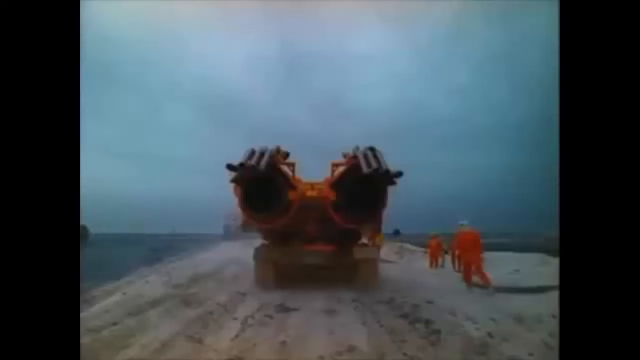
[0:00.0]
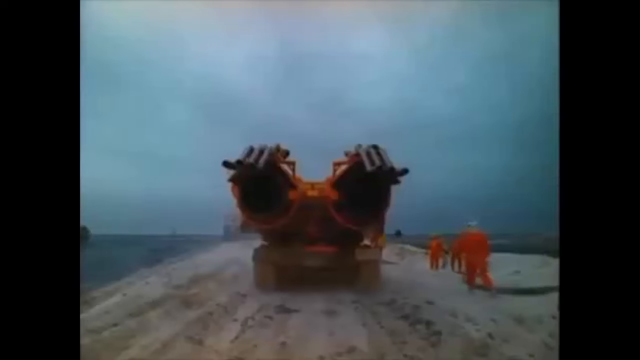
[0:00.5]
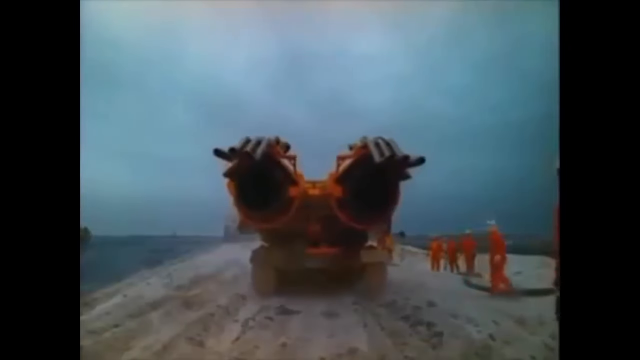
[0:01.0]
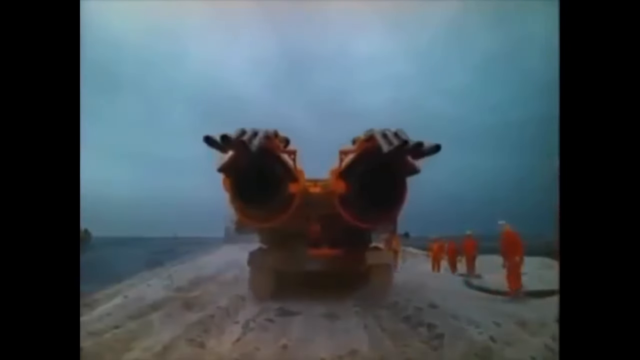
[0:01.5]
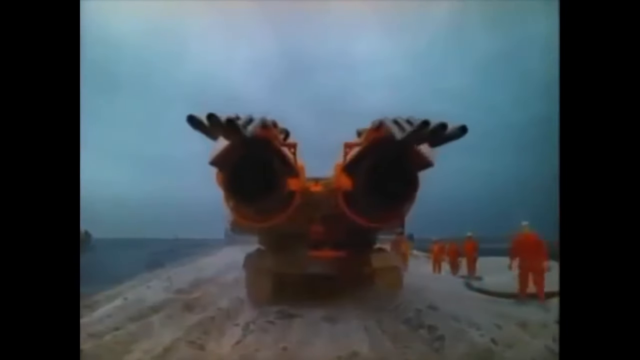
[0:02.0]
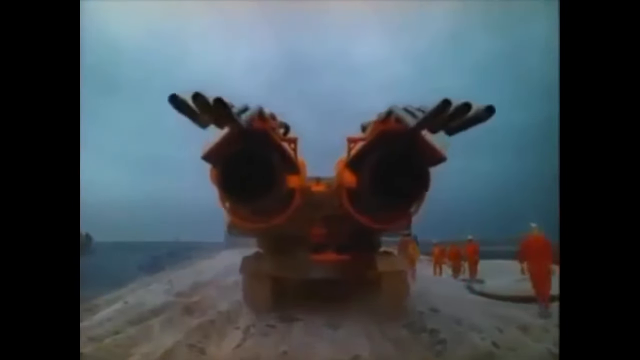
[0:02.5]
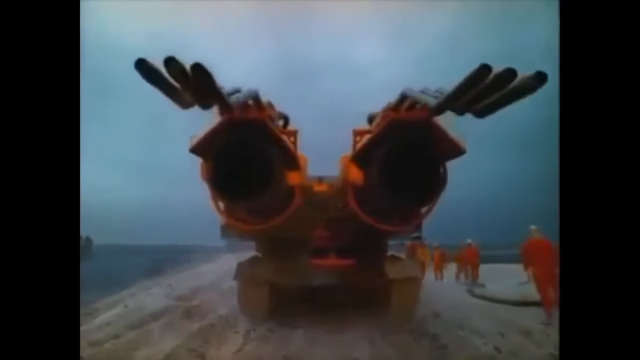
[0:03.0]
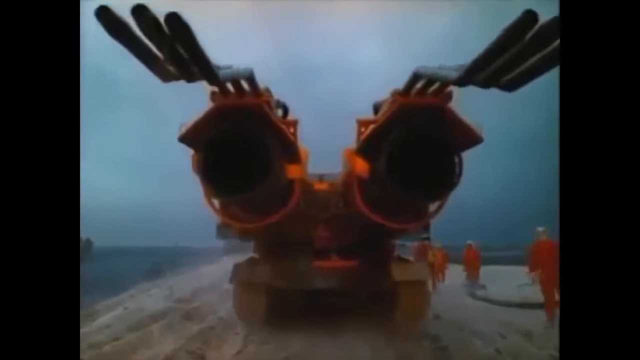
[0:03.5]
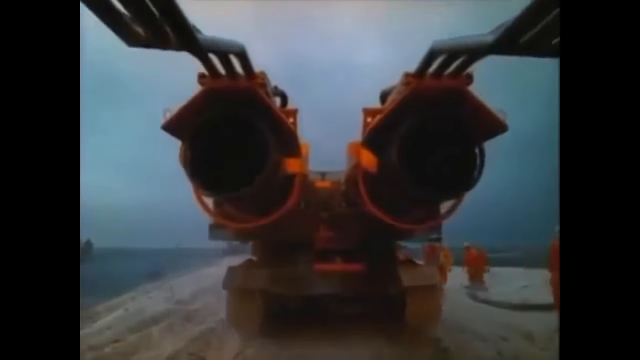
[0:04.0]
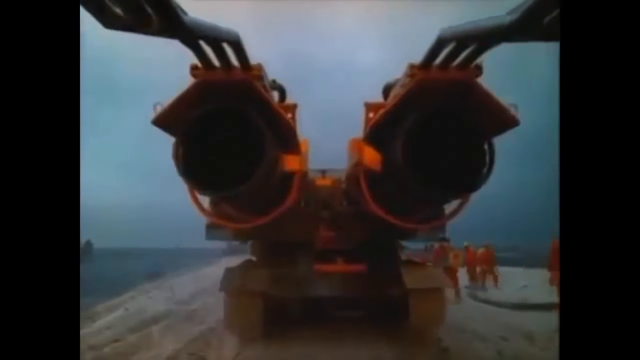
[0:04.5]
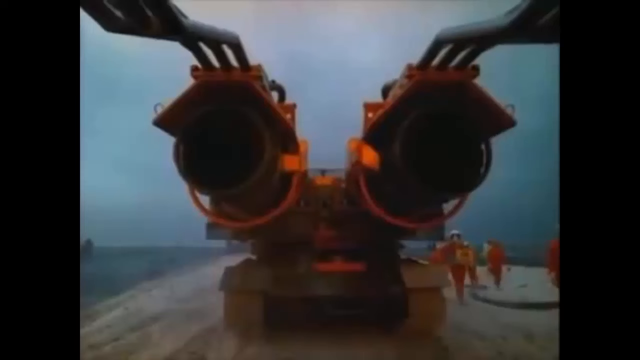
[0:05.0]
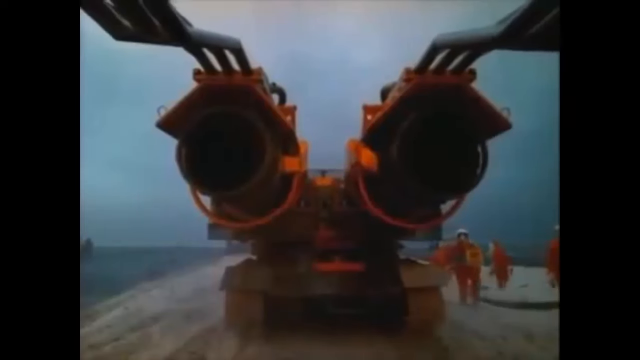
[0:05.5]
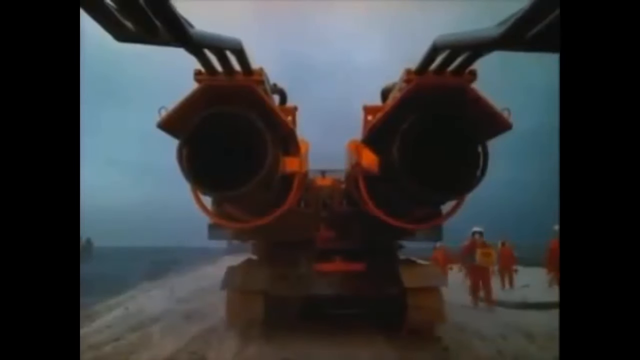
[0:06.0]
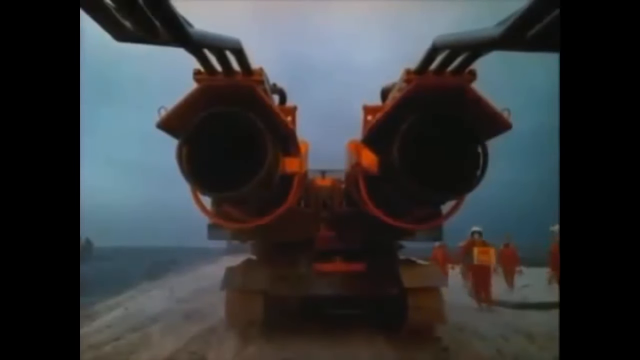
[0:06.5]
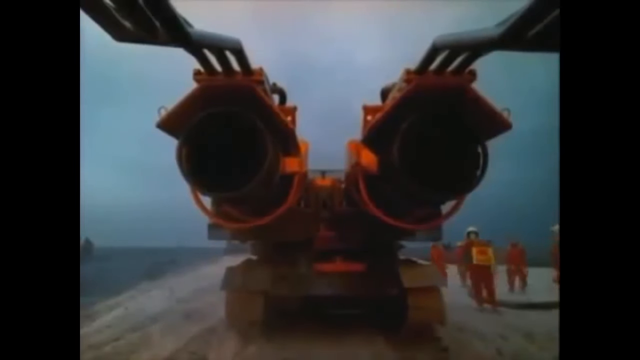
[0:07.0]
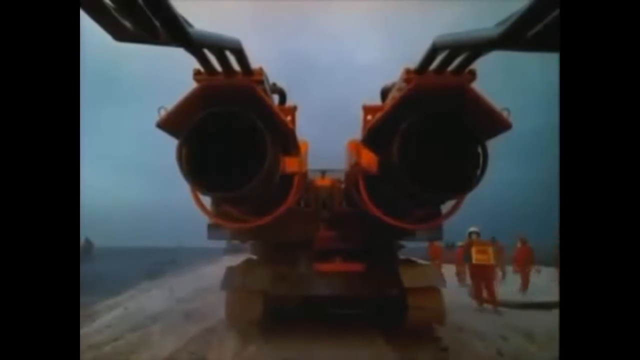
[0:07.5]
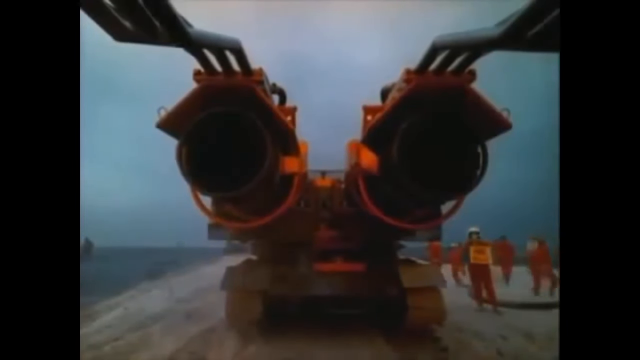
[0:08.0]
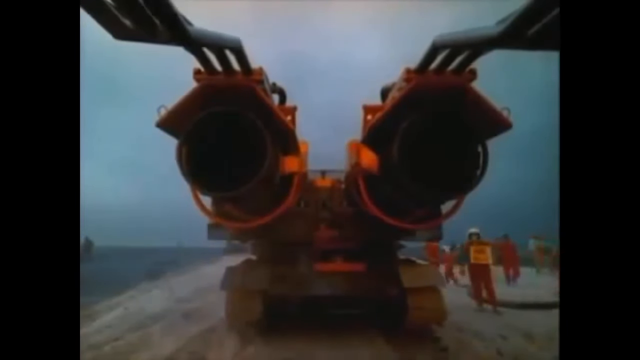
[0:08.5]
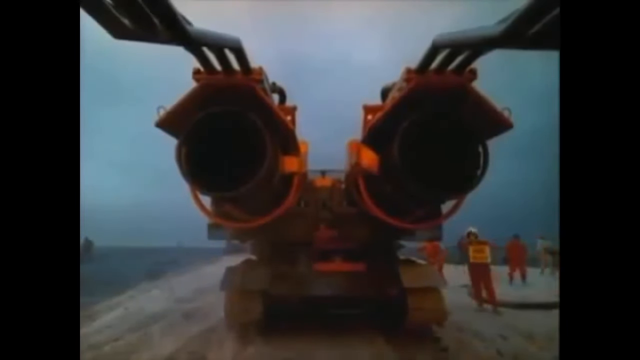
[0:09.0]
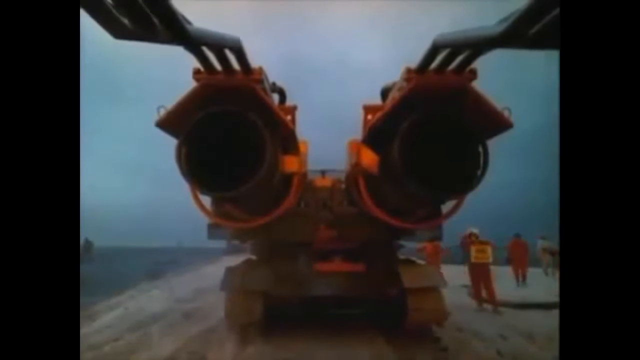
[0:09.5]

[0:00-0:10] Large vehicles appear, and many soldiers are controlling them. The vehicle seems to be a bomber or something similar. Toward the end, there is a blast, with a lot of fire here and there.